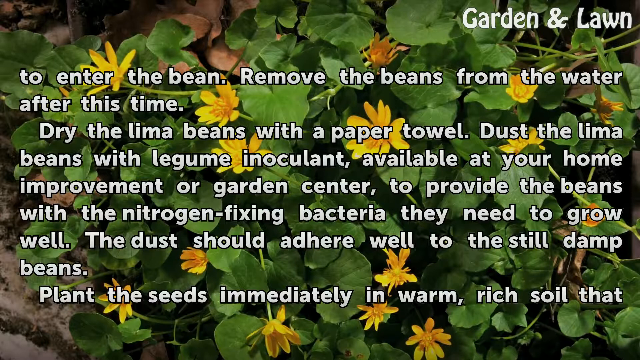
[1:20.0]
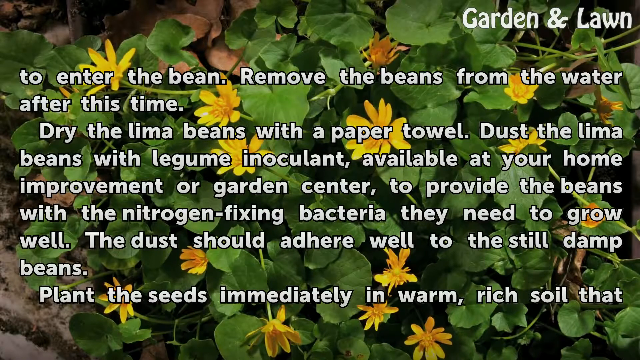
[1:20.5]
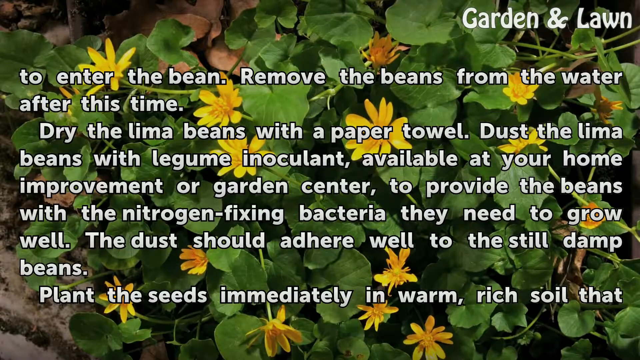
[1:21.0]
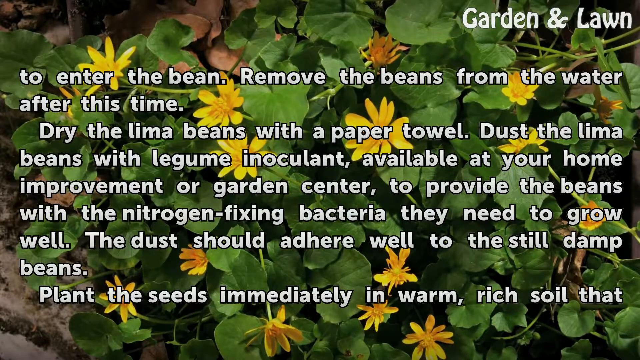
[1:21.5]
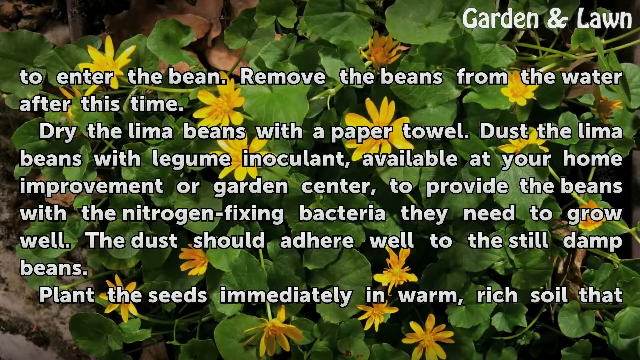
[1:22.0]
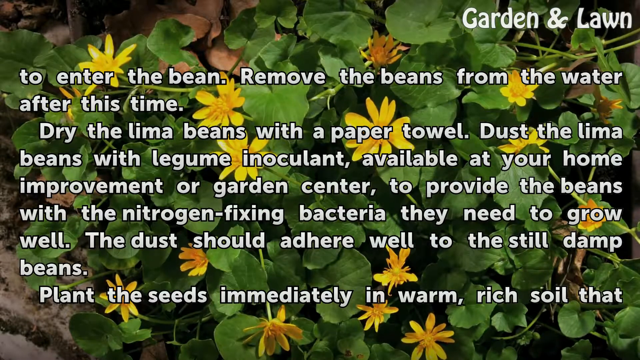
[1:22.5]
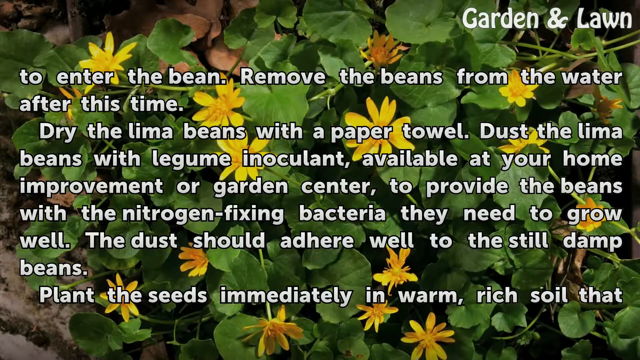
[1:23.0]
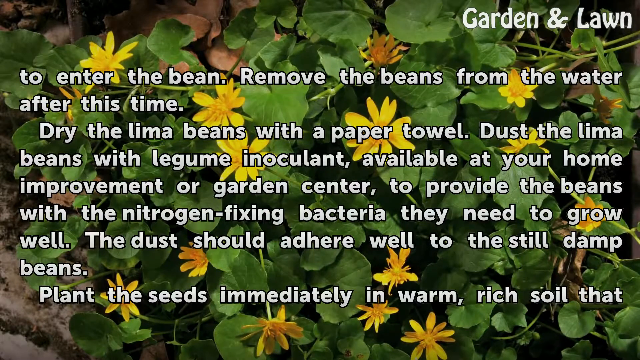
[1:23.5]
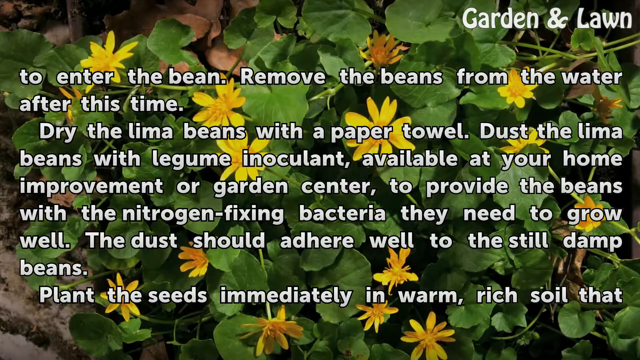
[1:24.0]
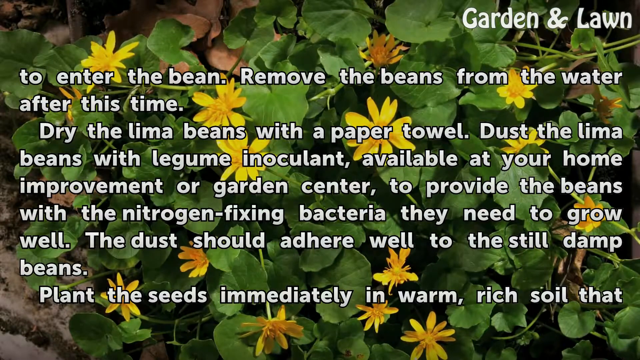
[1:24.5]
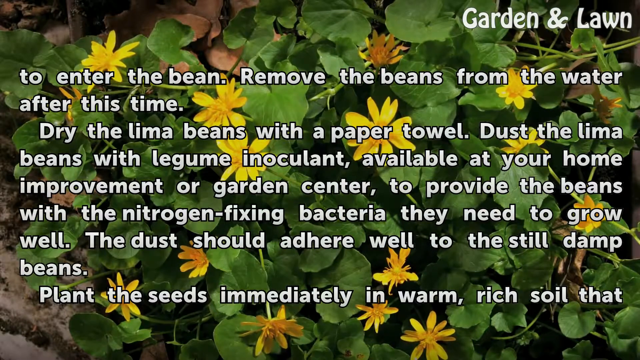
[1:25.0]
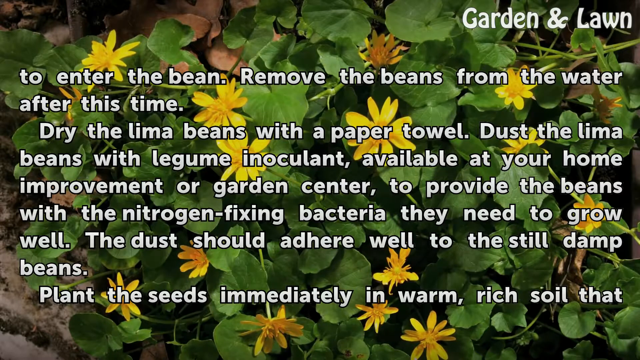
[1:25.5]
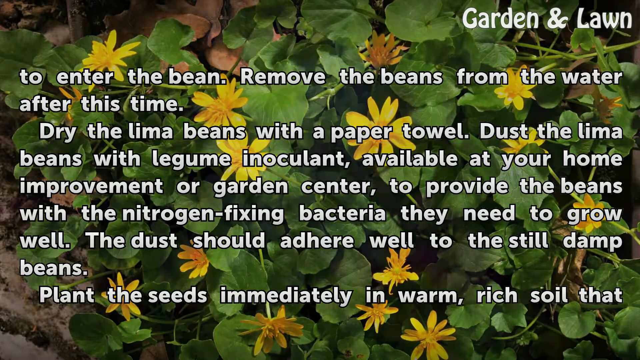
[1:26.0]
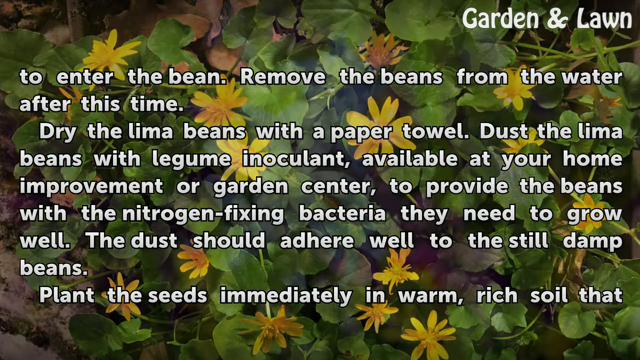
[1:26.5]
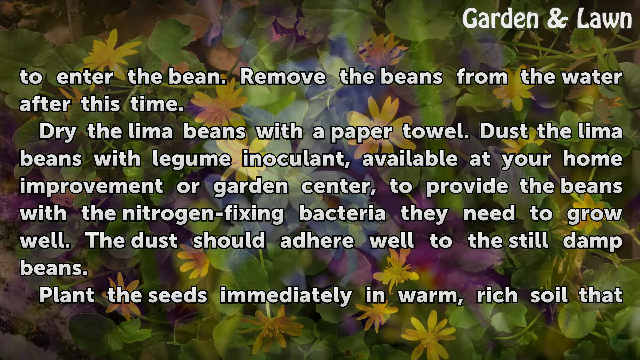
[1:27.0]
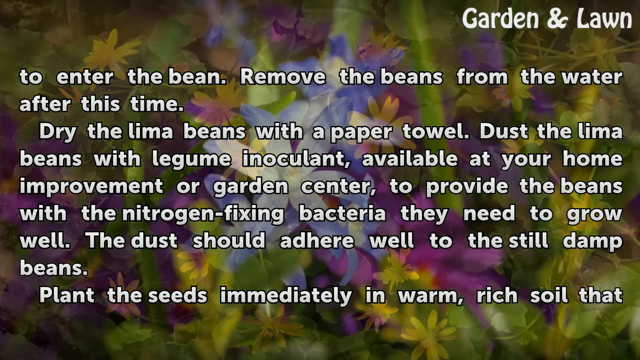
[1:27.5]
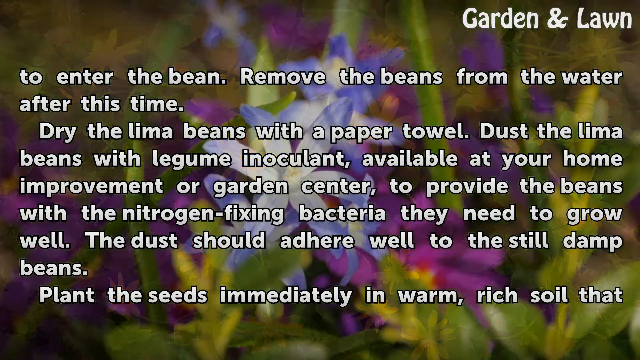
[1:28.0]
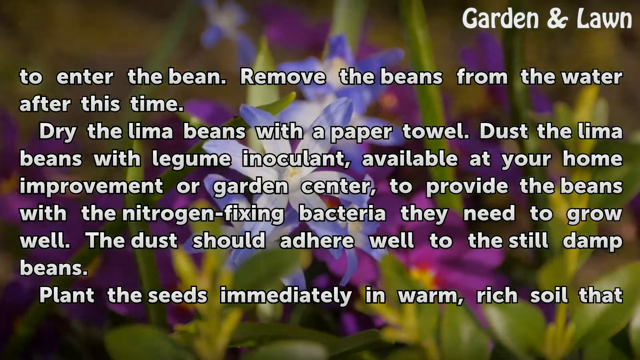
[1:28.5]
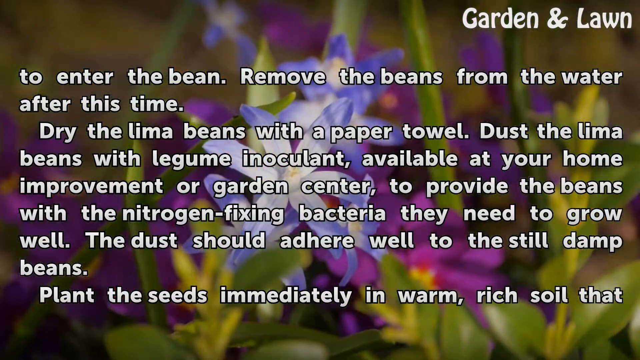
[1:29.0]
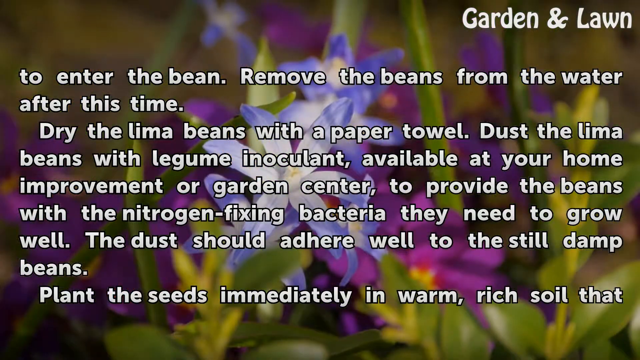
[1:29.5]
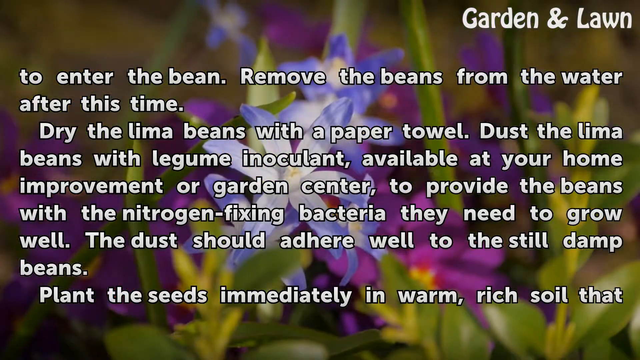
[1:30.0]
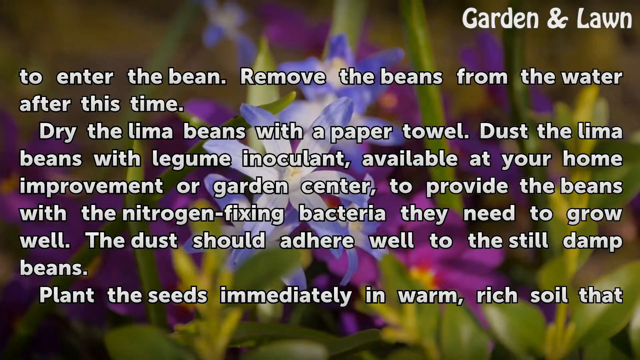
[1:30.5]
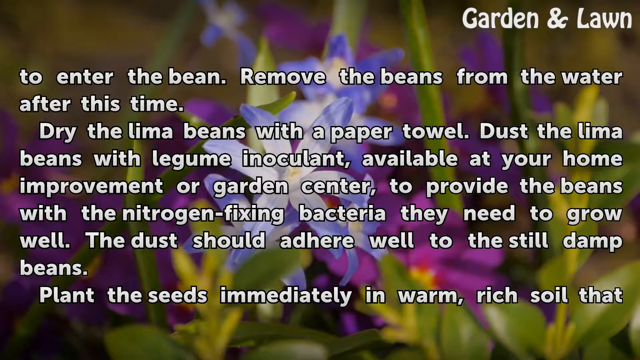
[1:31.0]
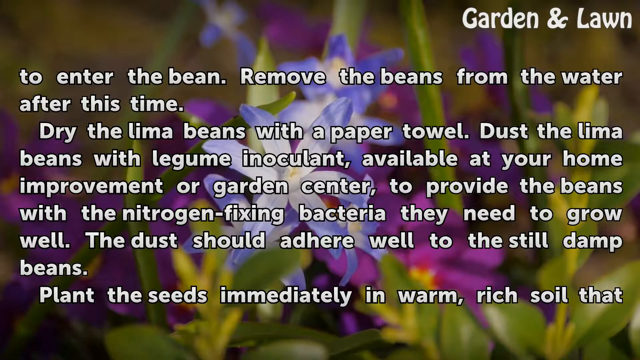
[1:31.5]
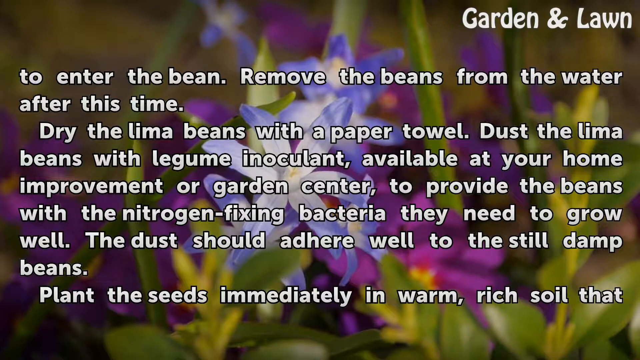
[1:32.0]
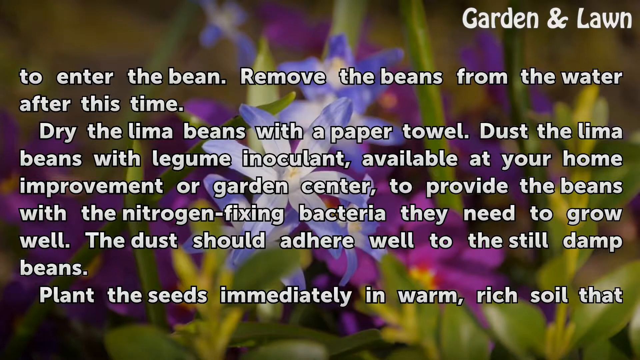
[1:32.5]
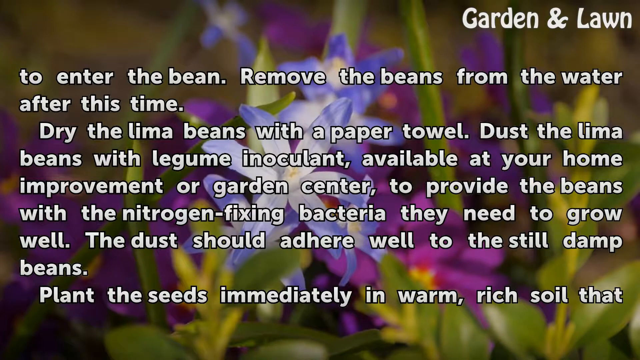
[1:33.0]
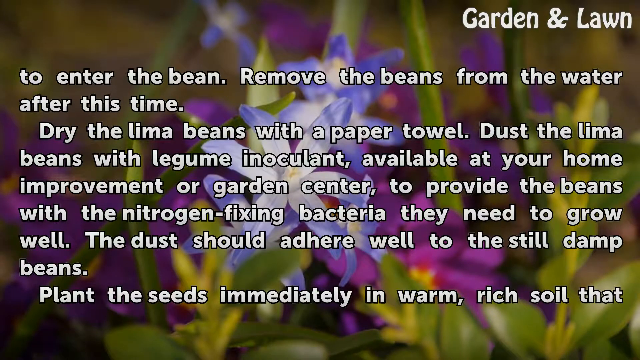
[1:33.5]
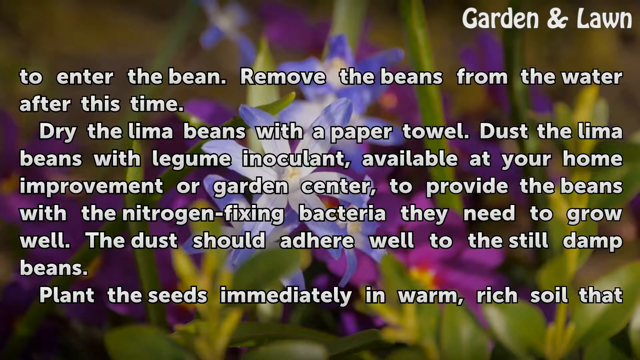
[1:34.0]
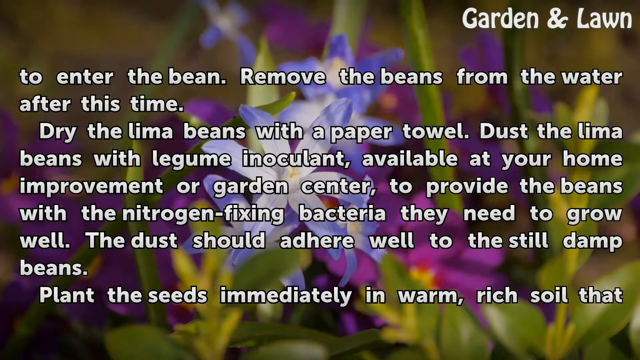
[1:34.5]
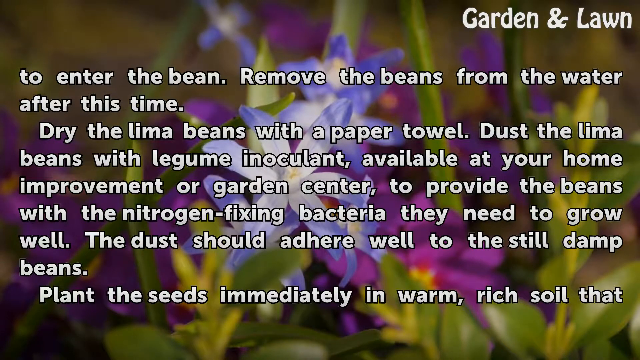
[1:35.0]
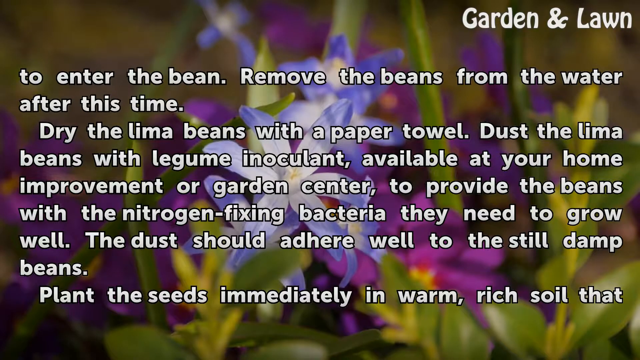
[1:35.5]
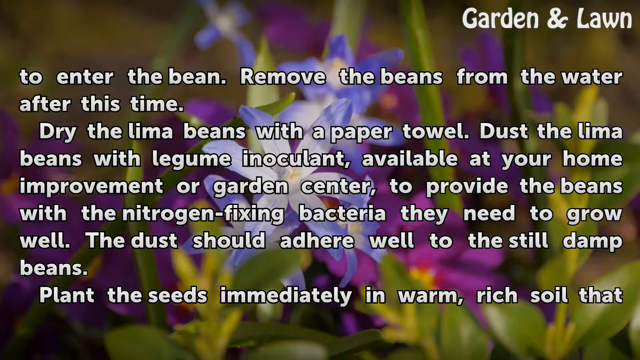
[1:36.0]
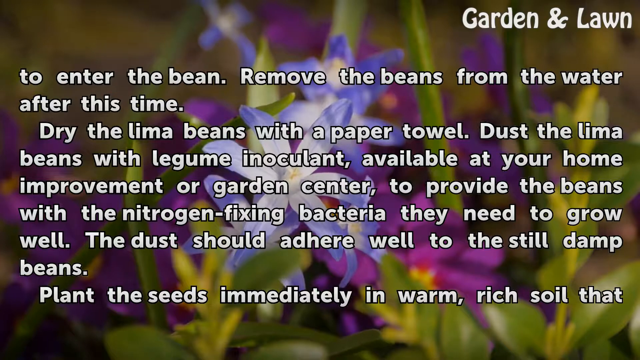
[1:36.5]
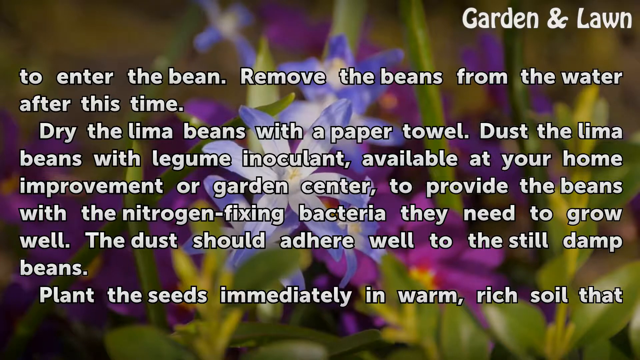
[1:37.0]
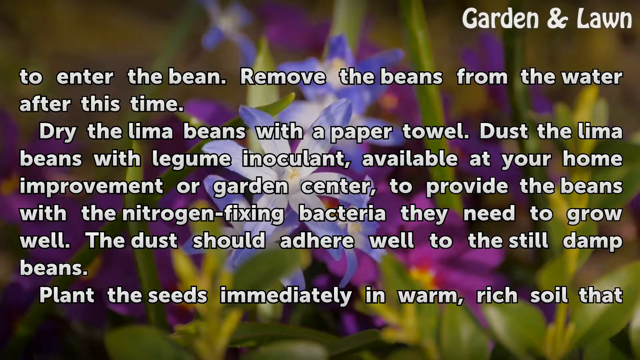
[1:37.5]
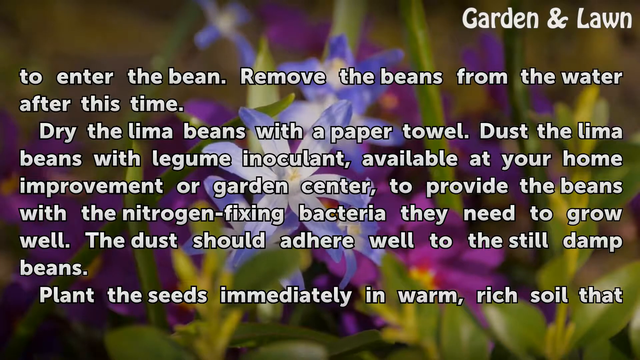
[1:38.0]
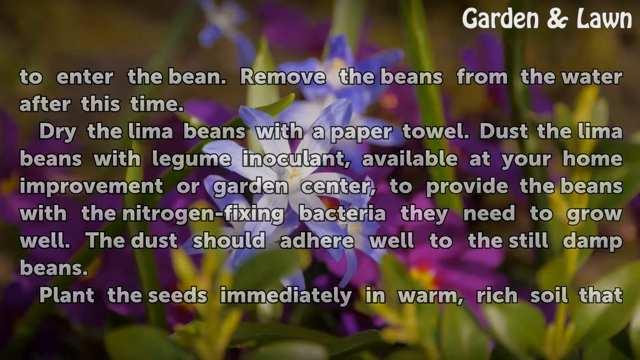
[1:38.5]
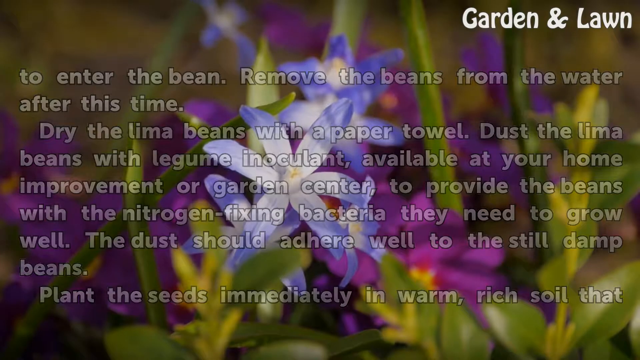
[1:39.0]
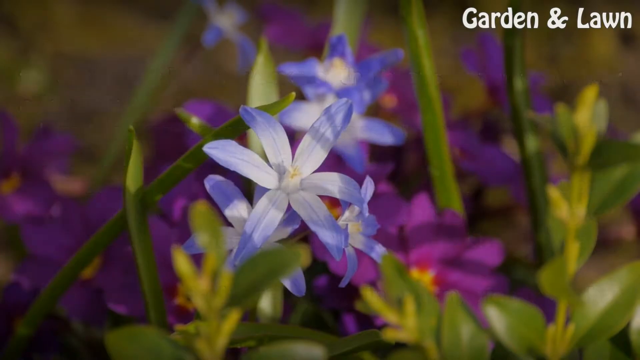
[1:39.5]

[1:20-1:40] The second screen of information about soaking dried lima beans before planting continues. It says that after a few minutes the beans are taken out of the water, blotted with a paper towel and dusted with legume inoculant, which can be bought at a home improvement or garden center. In the upper right of the screen is the source of the information, "garden & lawn", written with an ampersand. In the background, garden plants with lima beans sprouting wave.